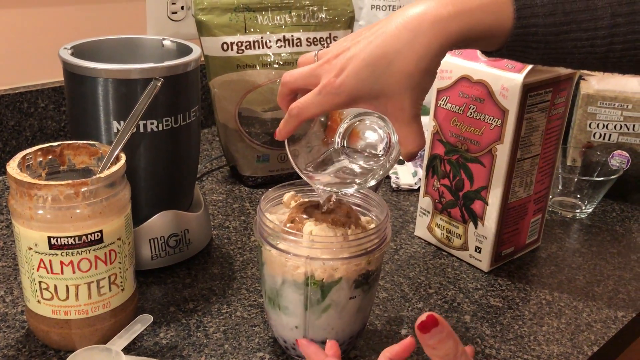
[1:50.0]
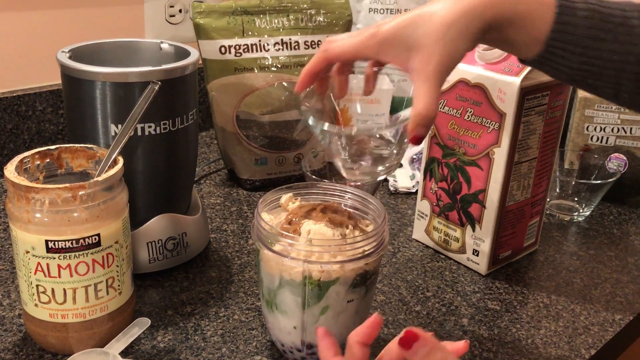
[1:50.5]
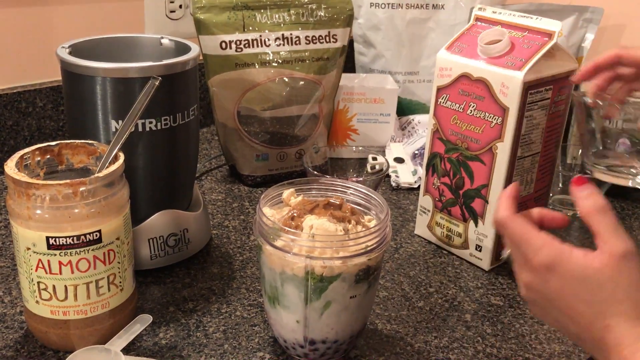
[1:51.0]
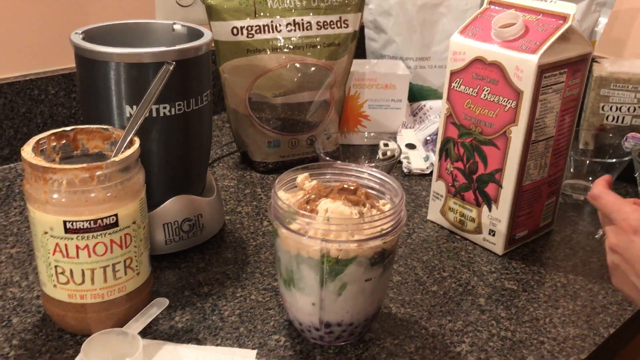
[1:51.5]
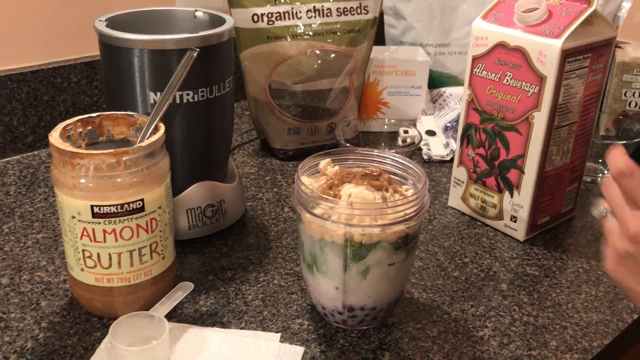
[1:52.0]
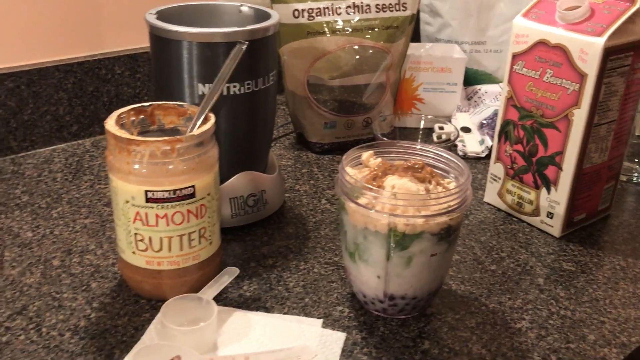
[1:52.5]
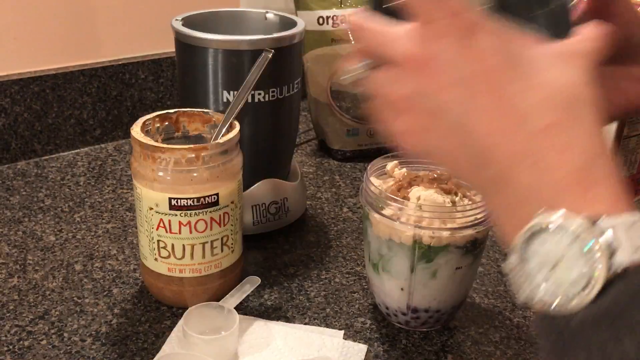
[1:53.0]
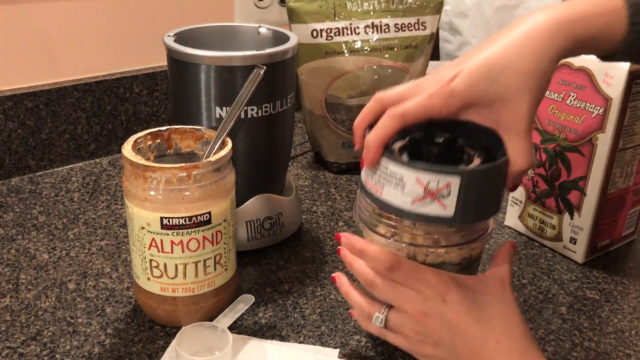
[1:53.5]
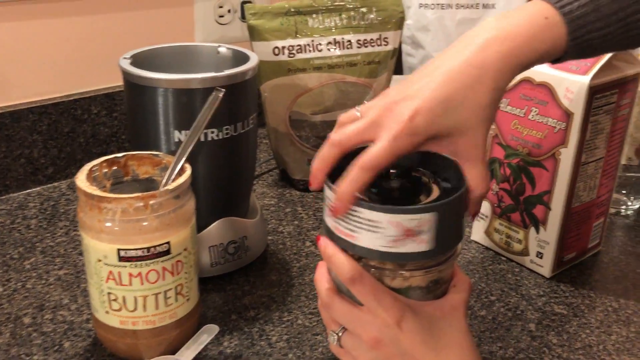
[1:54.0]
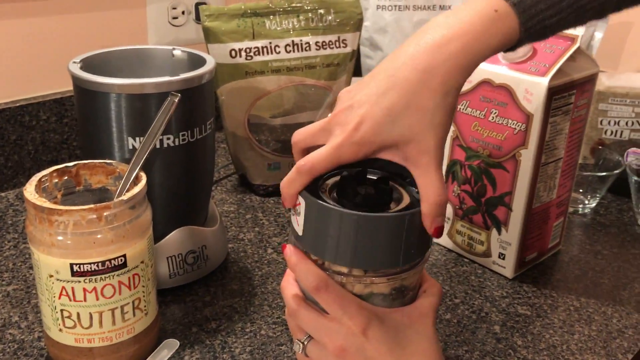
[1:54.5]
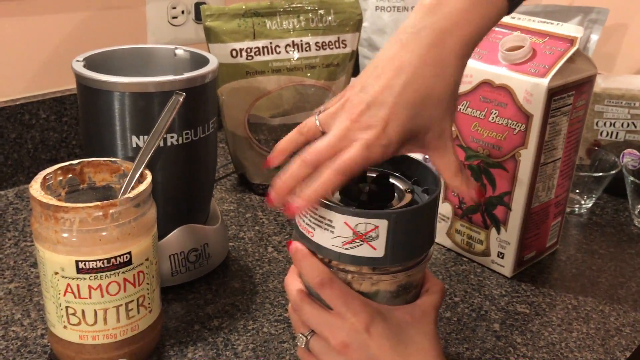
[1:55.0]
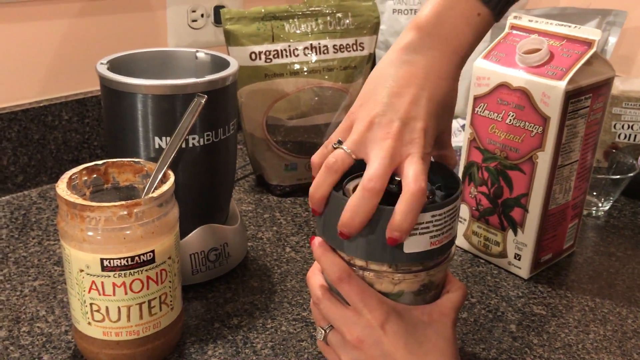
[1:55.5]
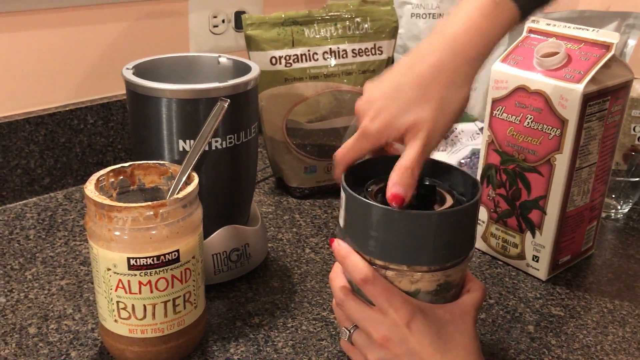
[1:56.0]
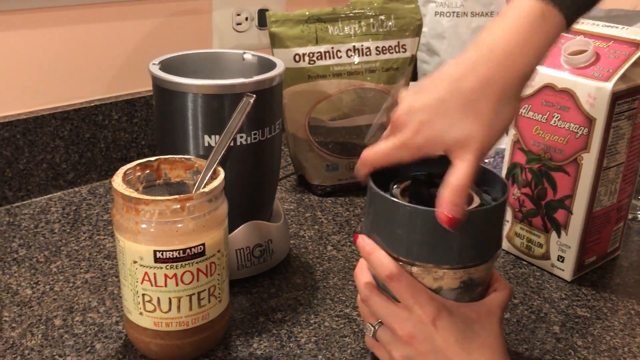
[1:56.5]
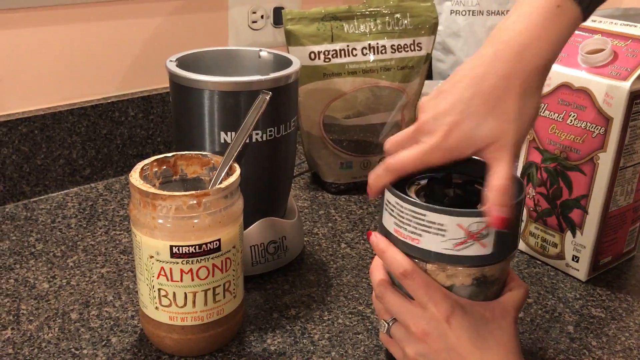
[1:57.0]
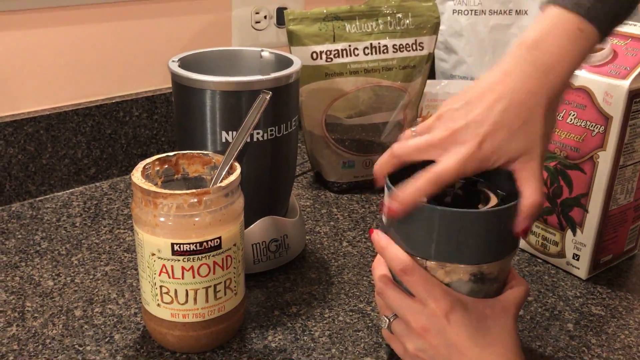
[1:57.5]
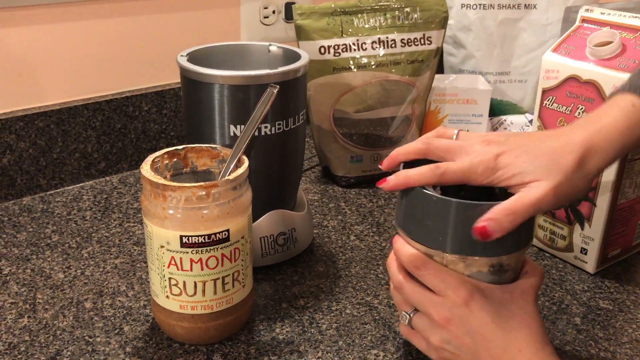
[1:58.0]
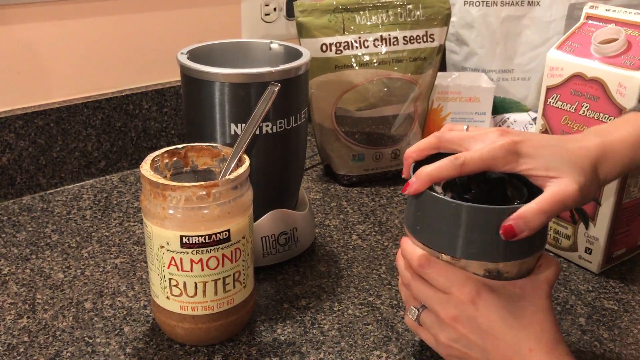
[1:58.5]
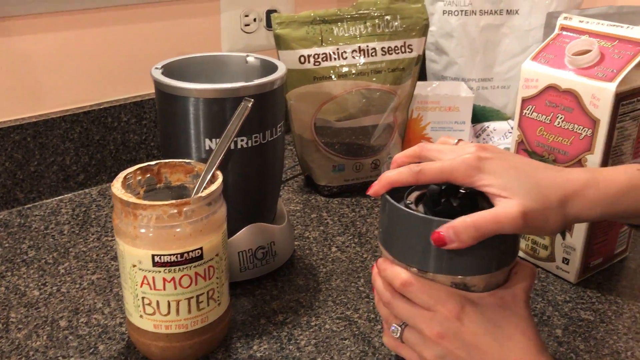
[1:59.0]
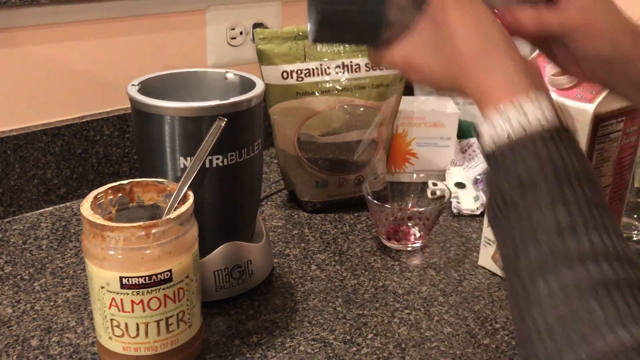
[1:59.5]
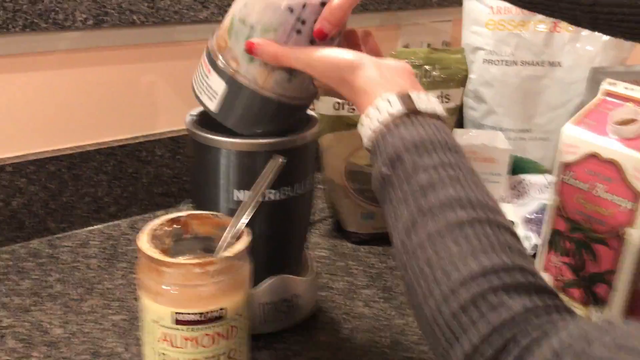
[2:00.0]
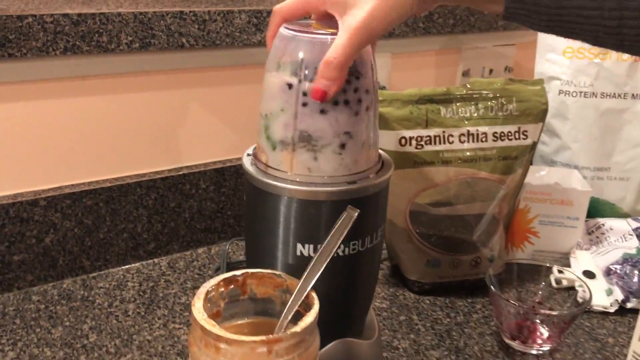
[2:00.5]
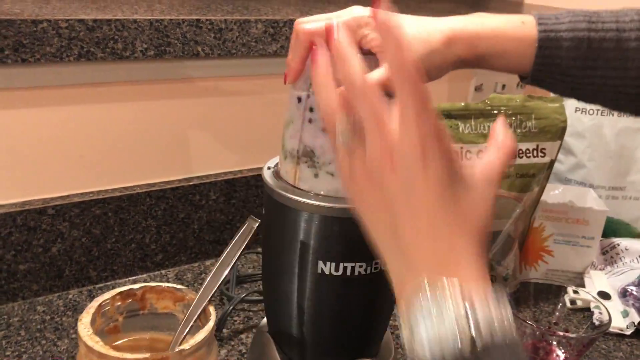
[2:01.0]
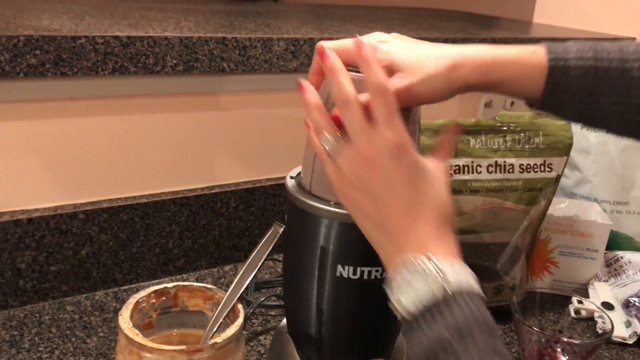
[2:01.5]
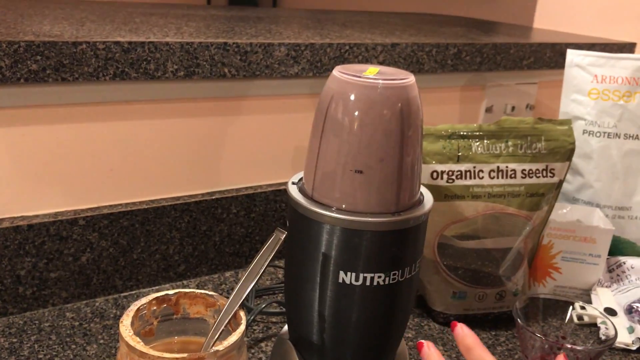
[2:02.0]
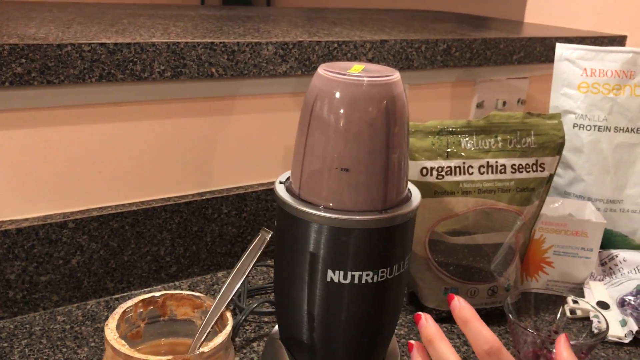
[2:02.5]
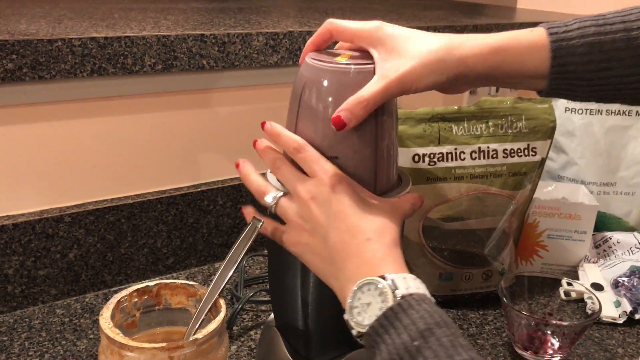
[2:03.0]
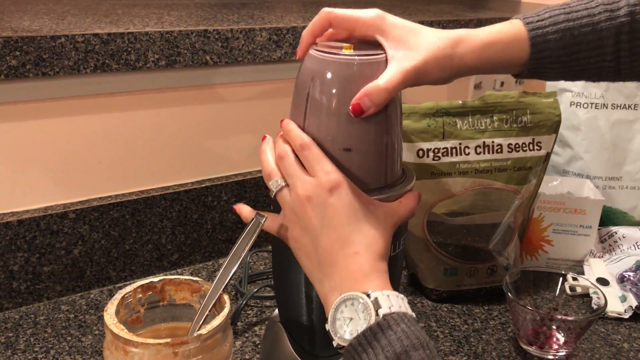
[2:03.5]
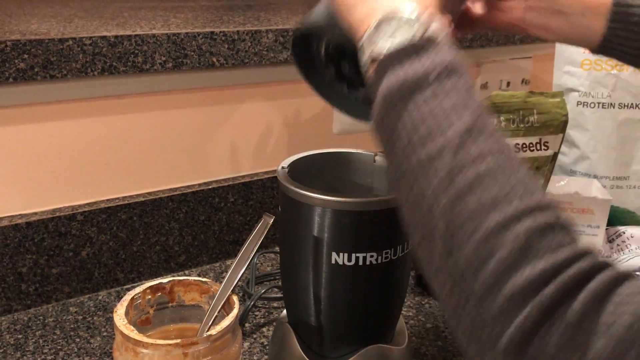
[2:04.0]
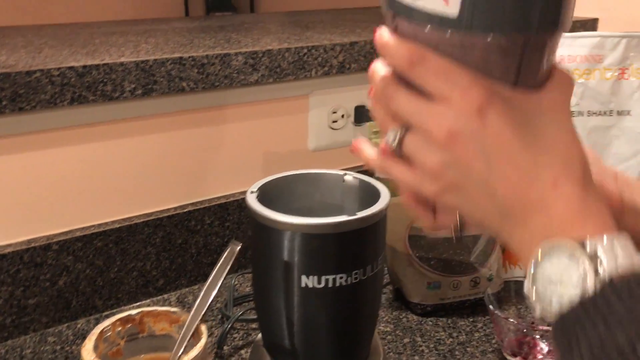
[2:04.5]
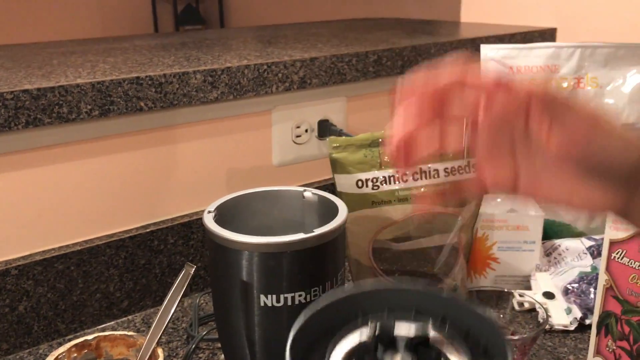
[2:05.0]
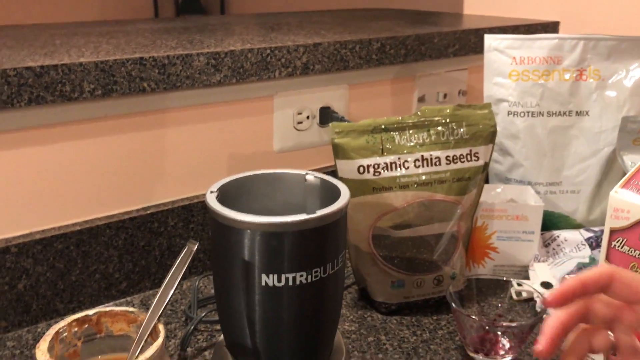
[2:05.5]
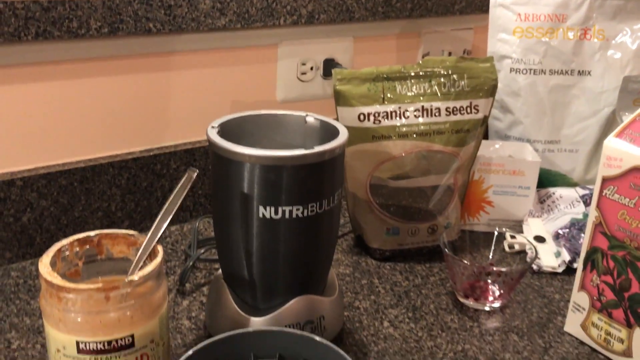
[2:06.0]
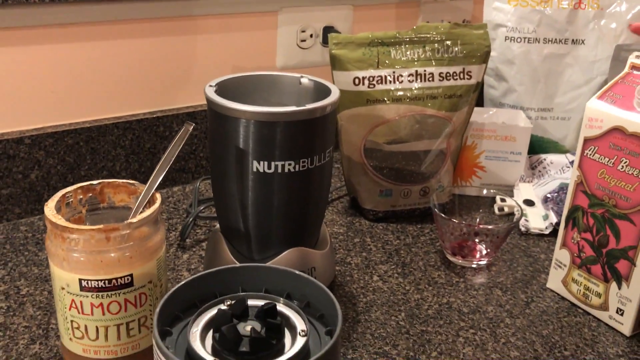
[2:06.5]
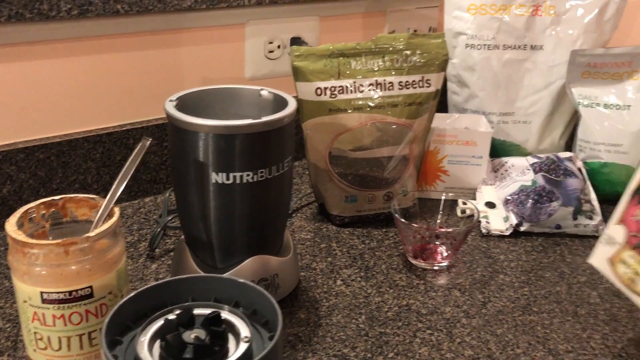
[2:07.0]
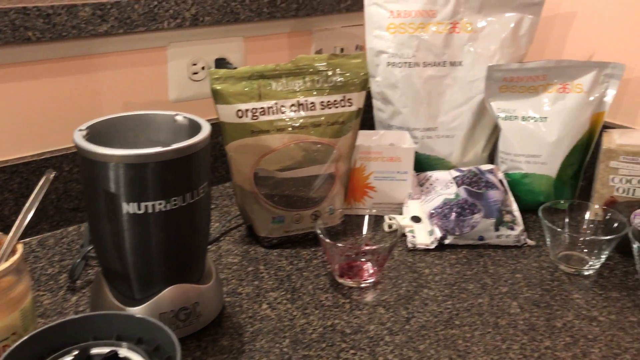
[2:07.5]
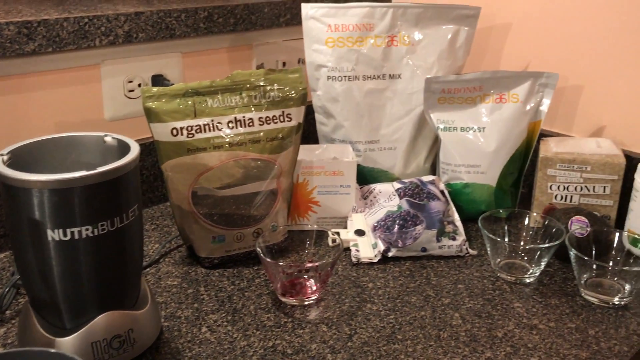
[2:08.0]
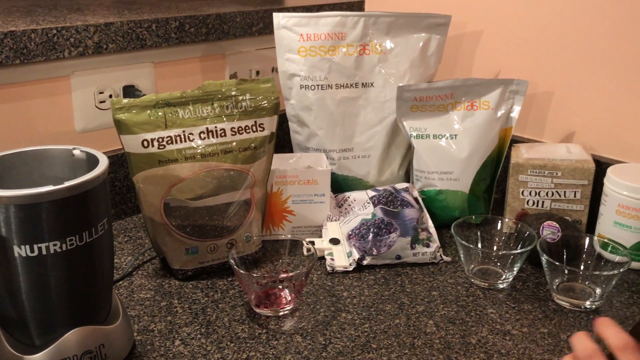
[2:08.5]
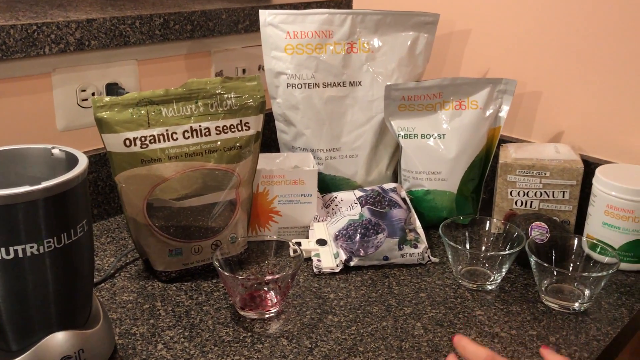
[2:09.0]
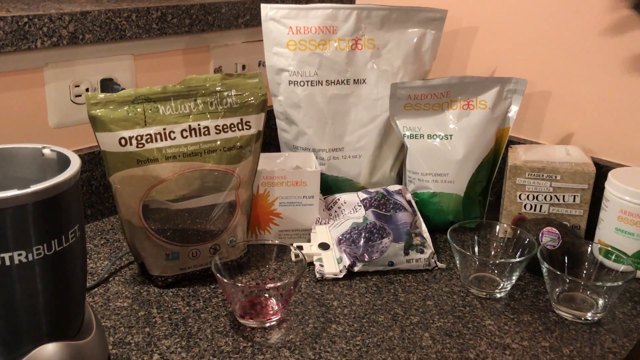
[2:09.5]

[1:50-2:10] The woman finishes pouring the water from a glass bowl. She takes a grey lid, another part of the blender, which has a black part in the middle and something written on a sticker on its side. She closes it tightly clockwise. The jar has a silver colour inside and on the lips, and that silver colour is also on the base of the black part of the jar. She places the jar full of ingredients on top of the other part of the blender, which has "Nutribullet" written on it. The blender blends all the ingredients together, and after just a short time she removes the glass jar from the black part and places it back on the cupboard surface.